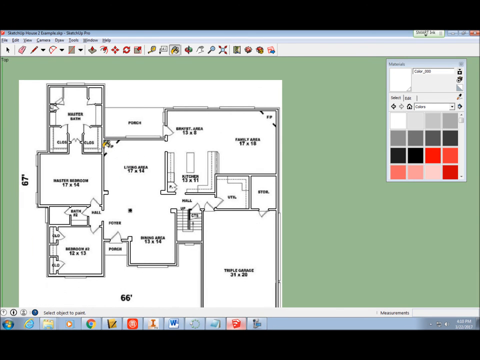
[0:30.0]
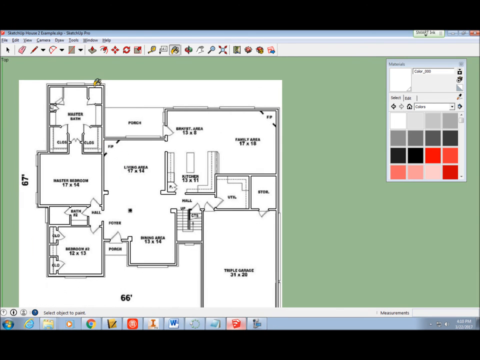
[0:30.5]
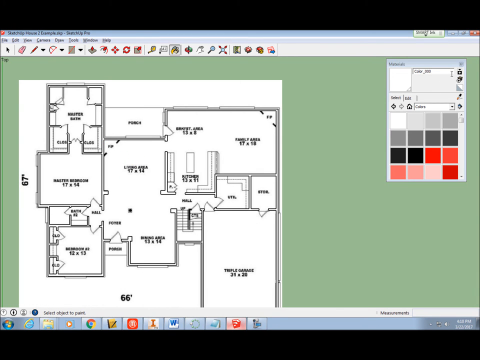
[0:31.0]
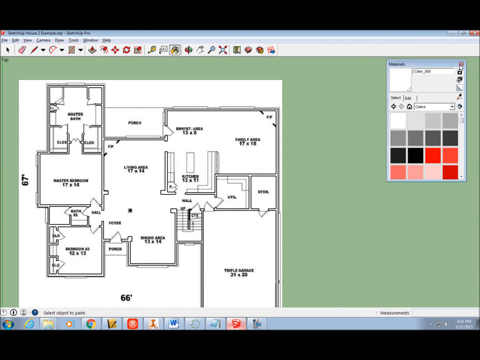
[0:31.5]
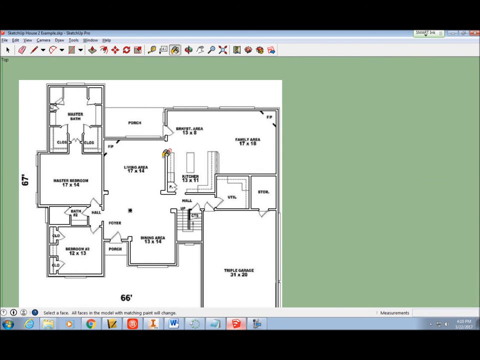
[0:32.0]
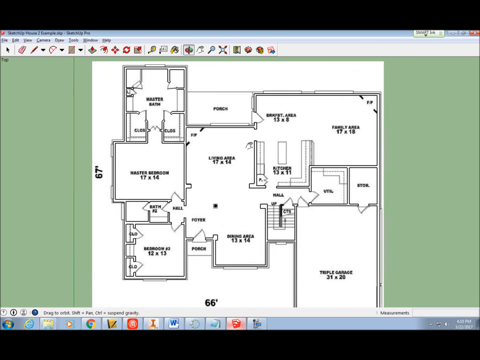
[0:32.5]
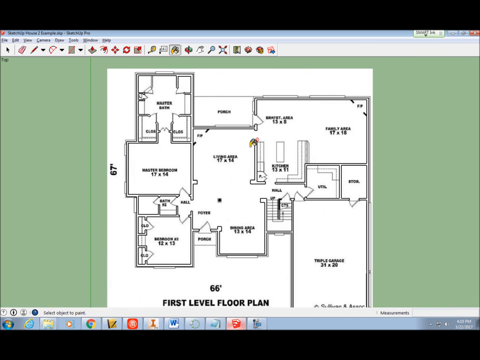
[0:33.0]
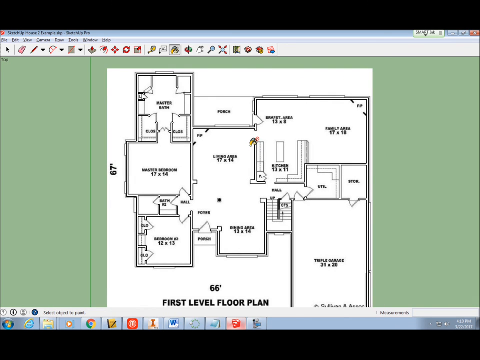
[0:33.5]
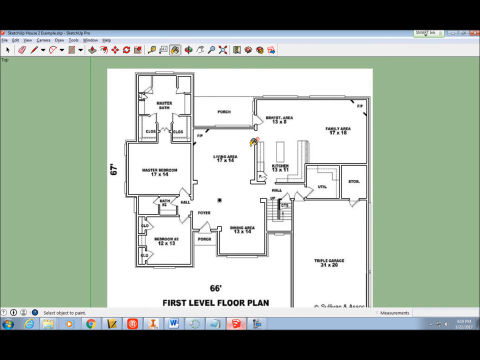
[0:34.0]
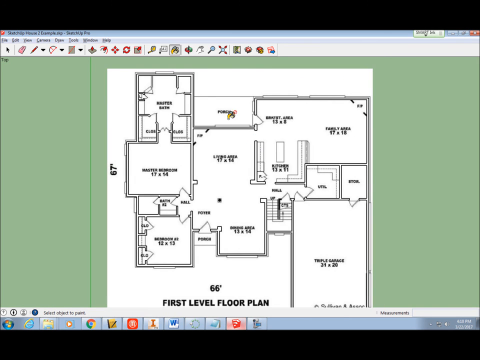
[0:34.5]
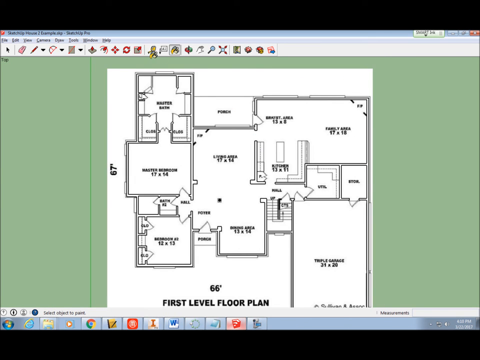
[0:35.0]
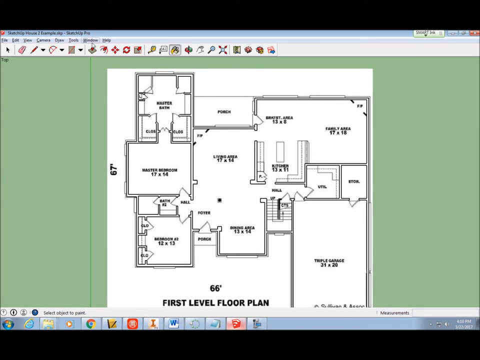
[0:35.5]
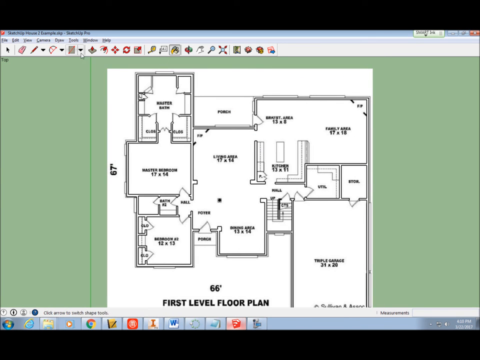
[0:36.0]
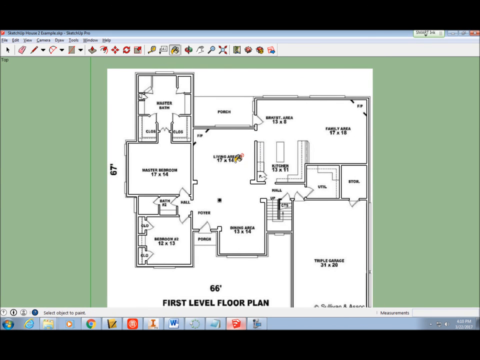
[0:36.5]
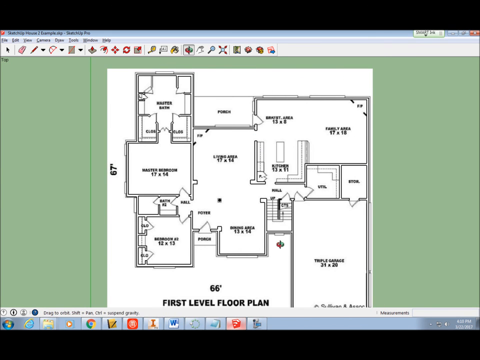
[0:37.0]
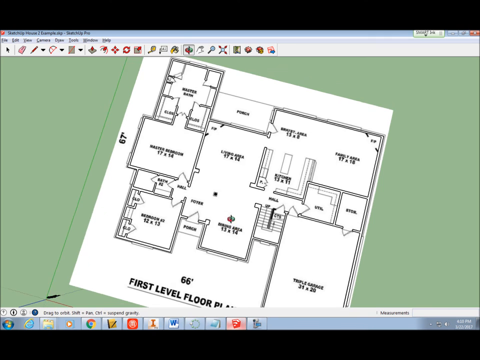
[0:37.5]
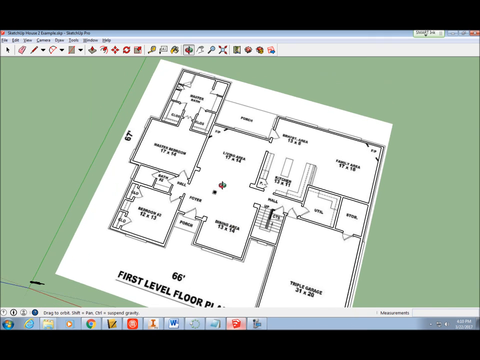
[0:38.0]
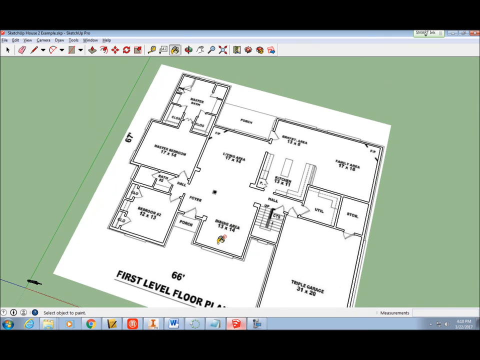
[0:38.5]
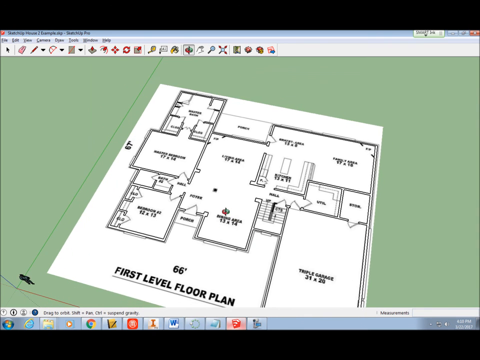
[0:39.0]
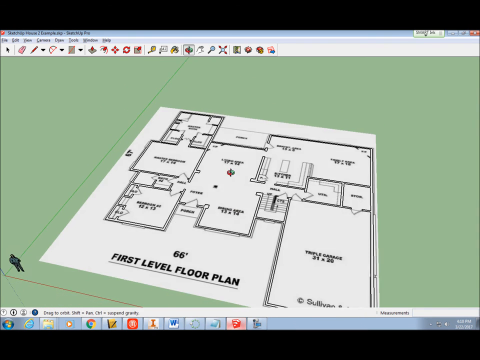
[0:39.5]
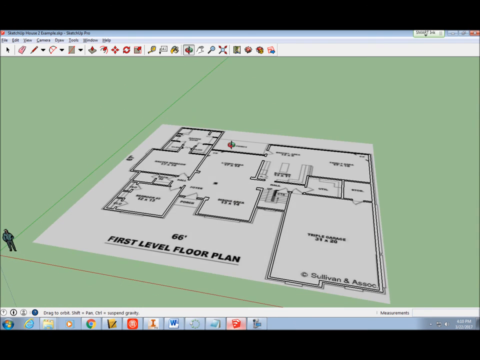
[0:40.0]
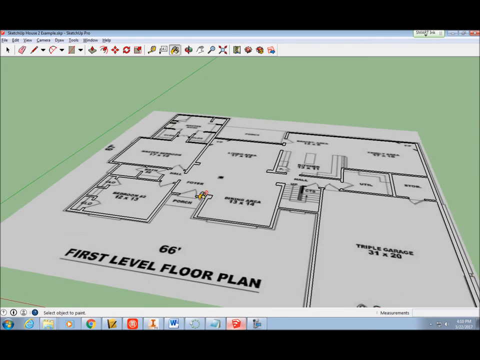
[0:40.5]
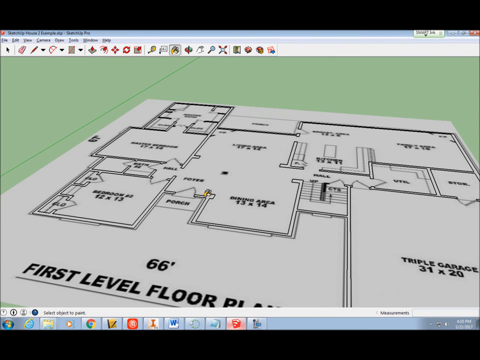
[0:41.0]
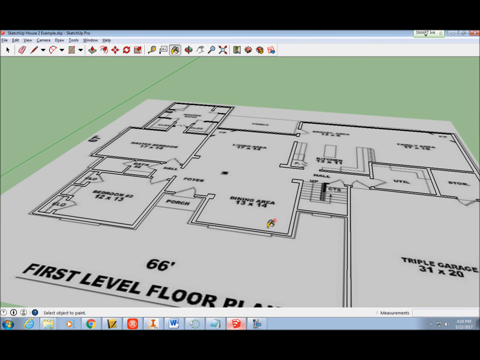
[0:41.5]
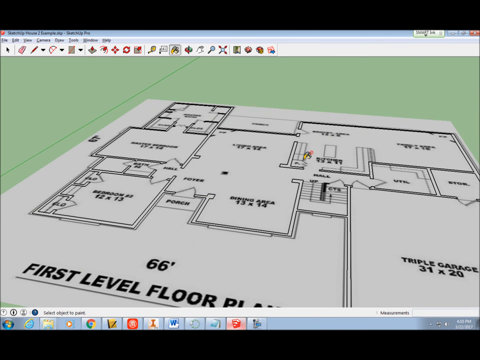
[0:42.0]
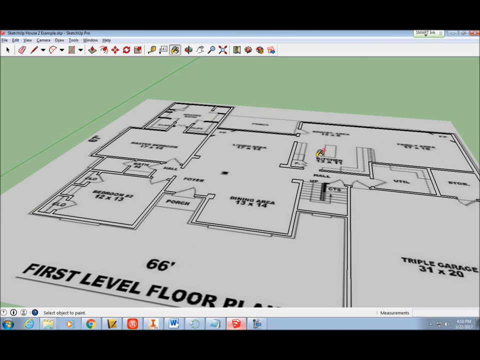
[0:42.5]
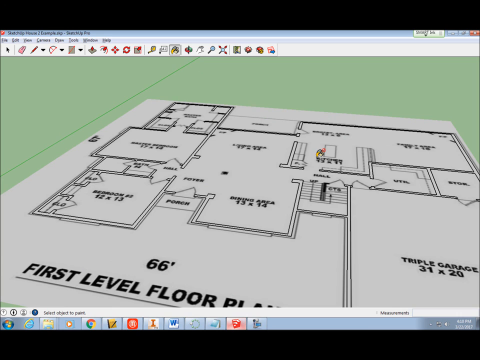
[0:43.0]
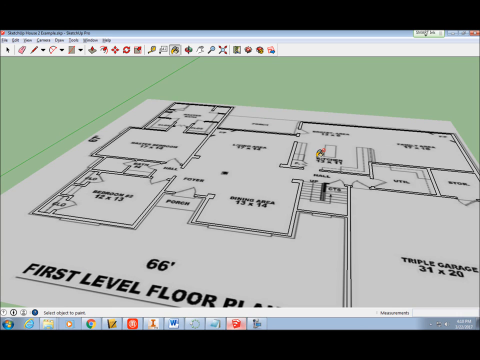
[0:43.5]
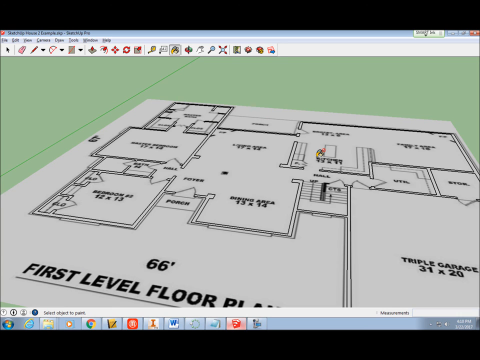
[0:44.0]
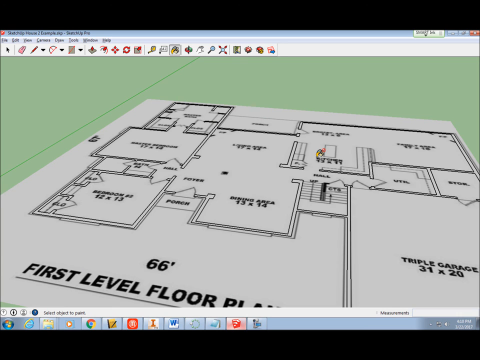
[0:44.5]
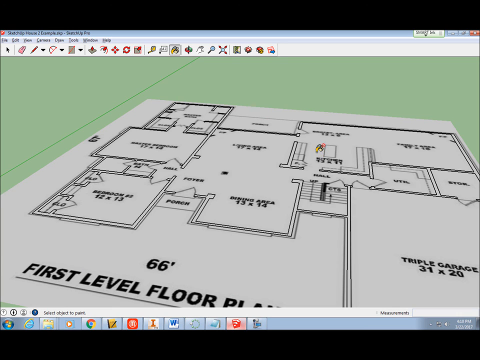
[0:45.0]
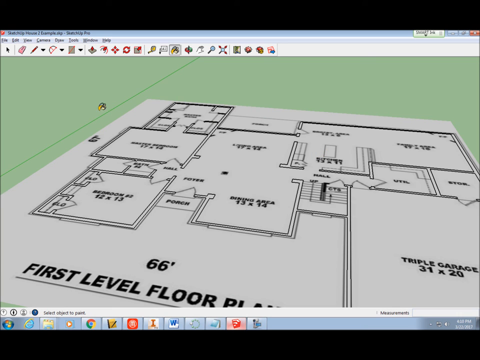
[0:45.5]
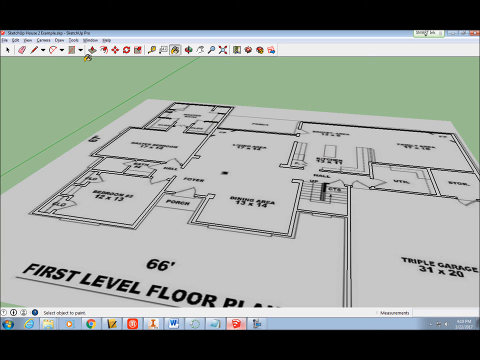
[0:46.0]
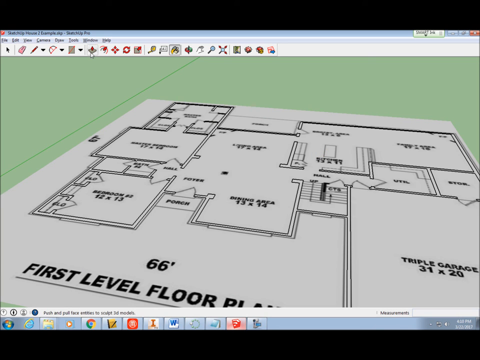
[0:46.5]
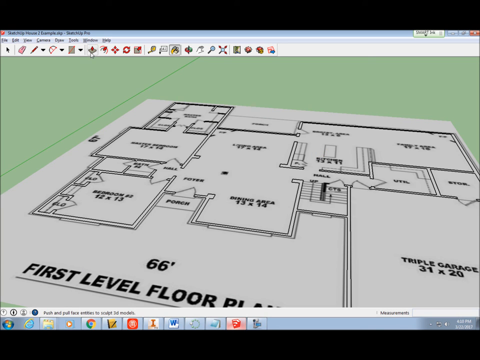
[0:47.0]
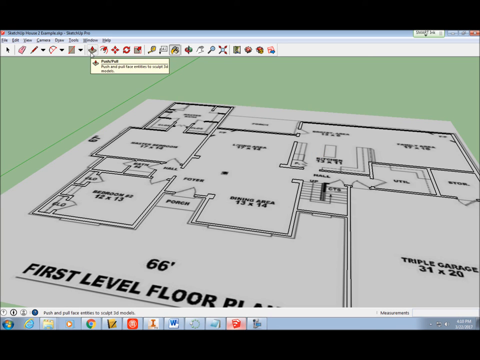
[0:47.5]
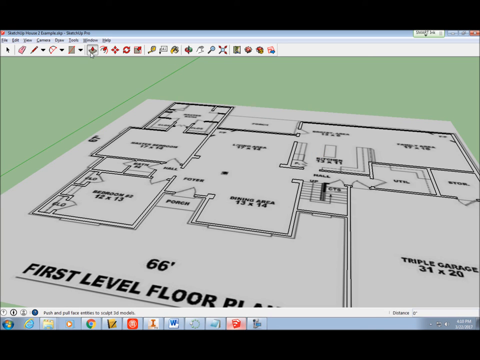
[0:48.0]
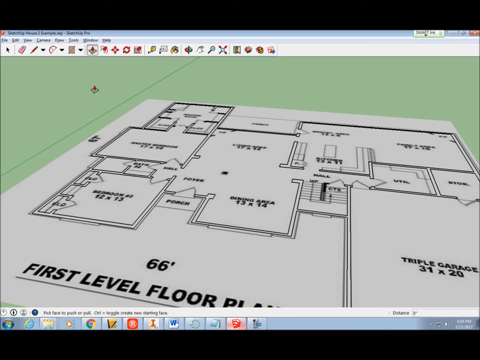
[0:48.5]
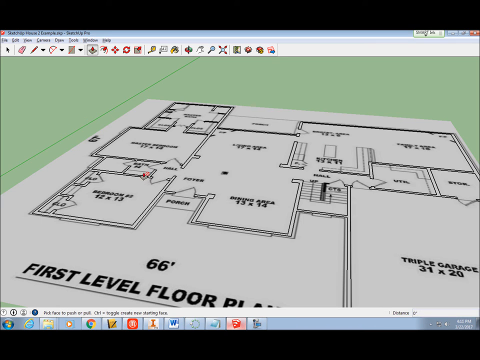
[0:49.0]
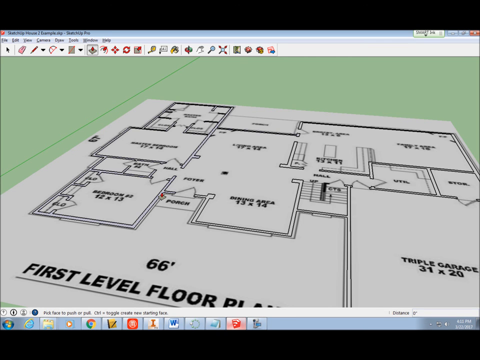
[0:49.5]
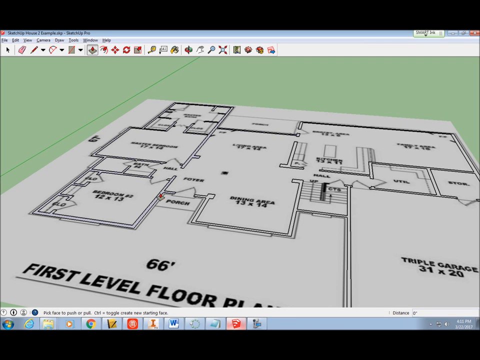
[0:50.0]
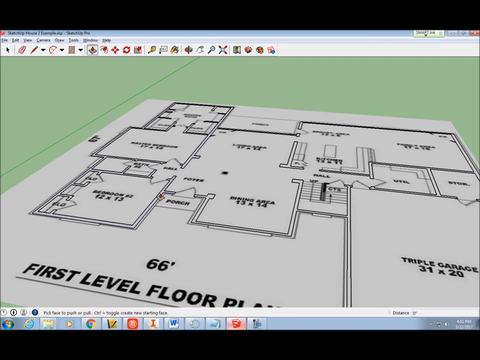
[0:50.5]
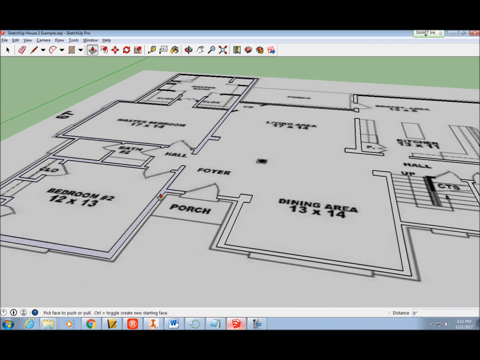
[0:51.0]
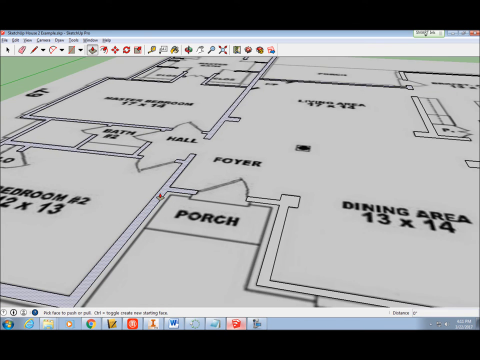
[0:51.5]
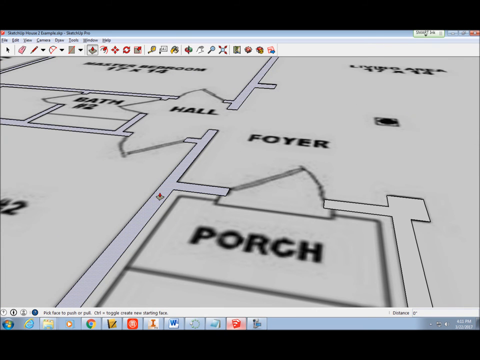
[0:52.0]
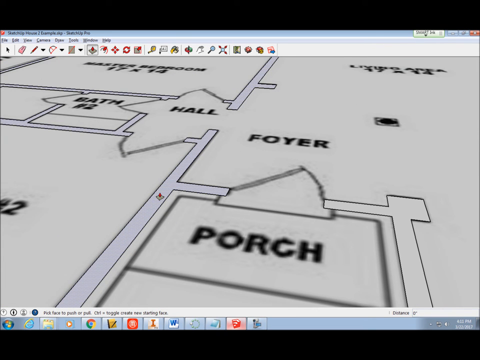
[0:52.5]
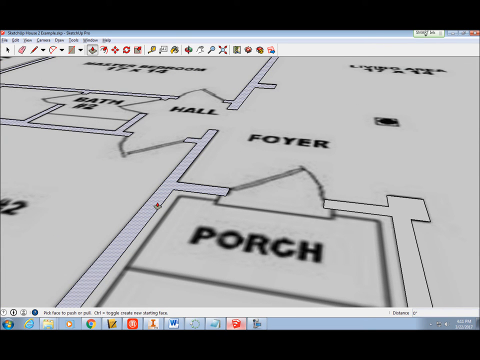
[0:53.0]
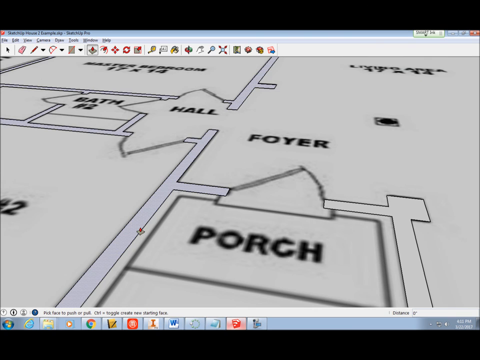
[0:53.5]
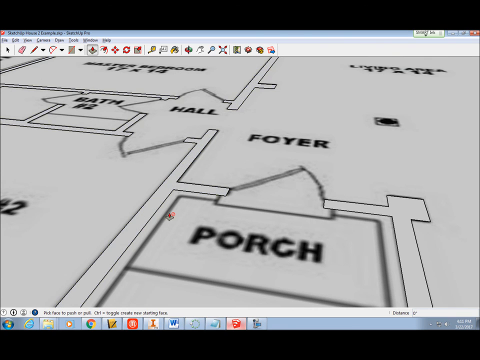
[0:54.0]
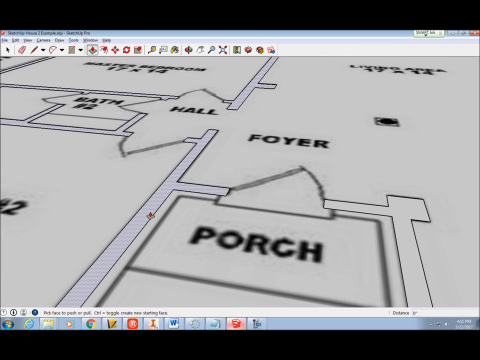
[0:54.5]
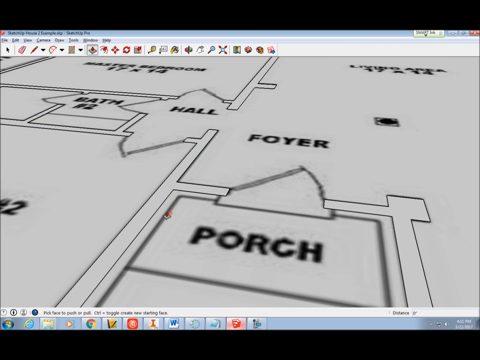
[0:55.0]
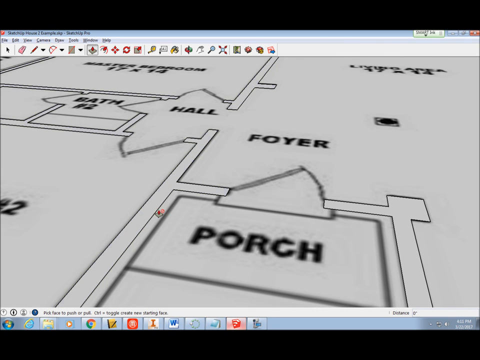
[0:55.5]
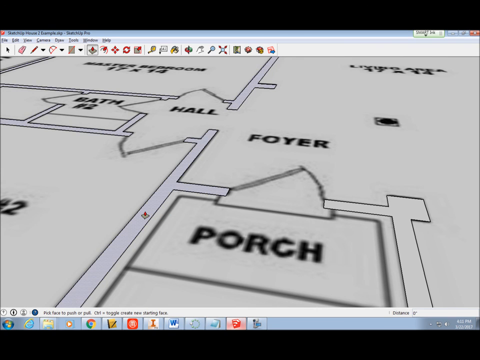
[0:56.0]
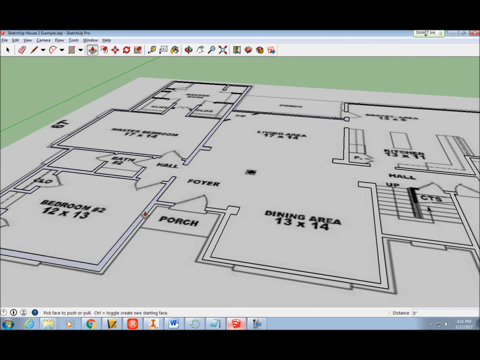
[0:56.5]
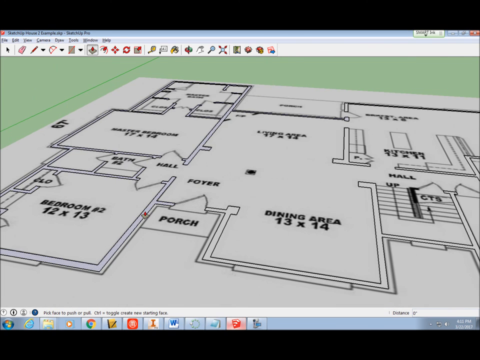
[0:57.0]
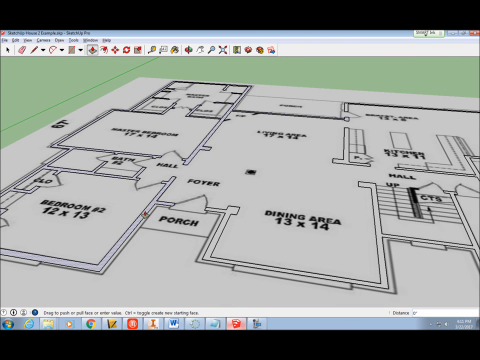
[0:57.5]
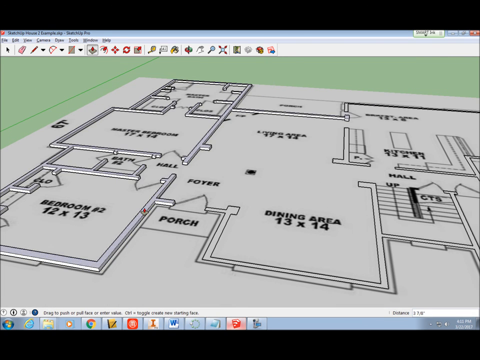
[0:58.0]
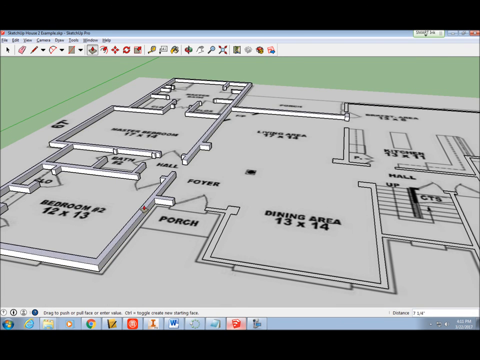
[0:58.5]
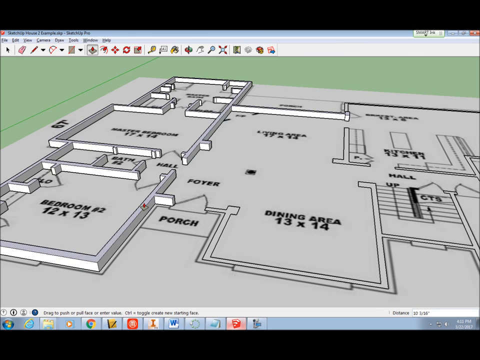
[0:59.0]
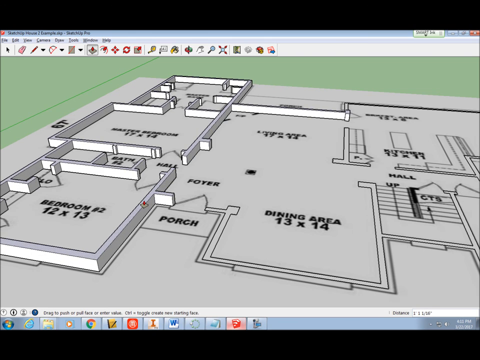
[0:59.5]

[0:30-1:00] A floor plan for a house with multiple rooms is modeled in a 3D software application, with the person's entire computer screen visible. They start by closing an open window box that says "Materials" and move the floor plan image to the center of the screen. They click on something to rotate the image as if standing at eye level, so the image kind of turns on itself and looks more like a flat sheet of paper coming across the screen rather than a bird's eye view. The view zooms in on the area that says "Dining Area", and the cursor goes around the walls of that room. He clicks a box on the top banner for "Selection Tools" and zooms in on the walls surrounding the master bedroom and bedroom number two, as well as the other room in the house. The back room cannot be made out, but the porch in the backyard wall is also being raised; he pulls the walls up and they rise as they would in a 3D model being built.